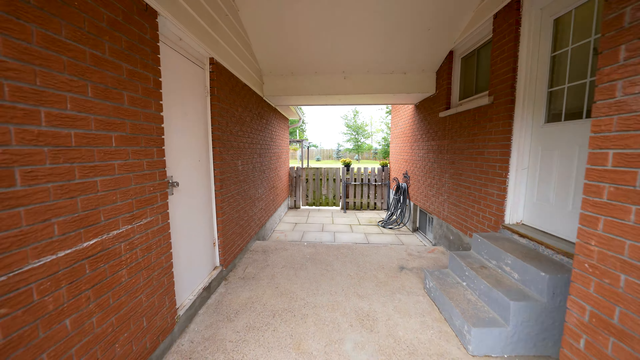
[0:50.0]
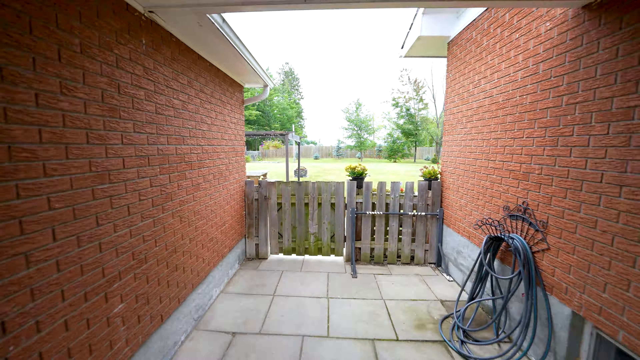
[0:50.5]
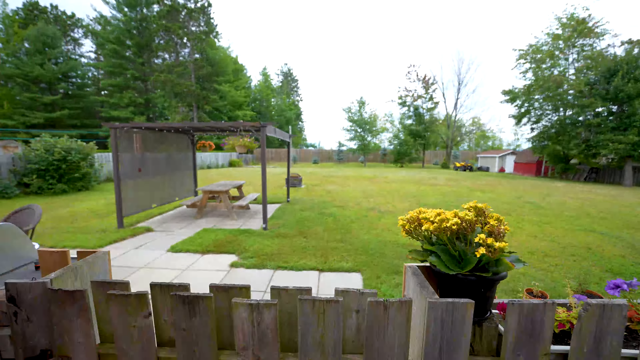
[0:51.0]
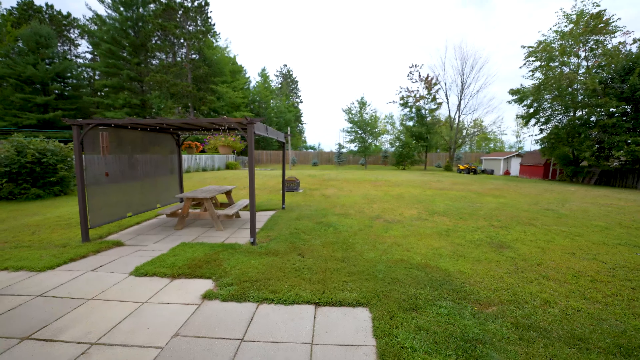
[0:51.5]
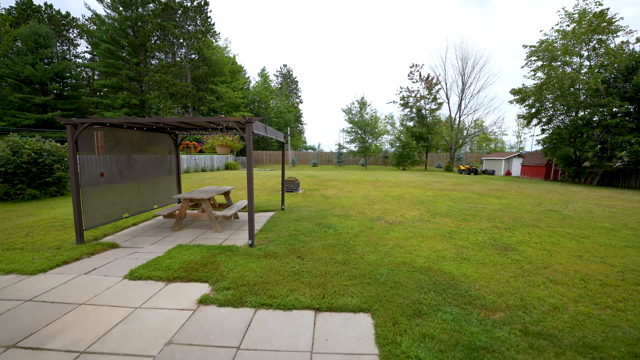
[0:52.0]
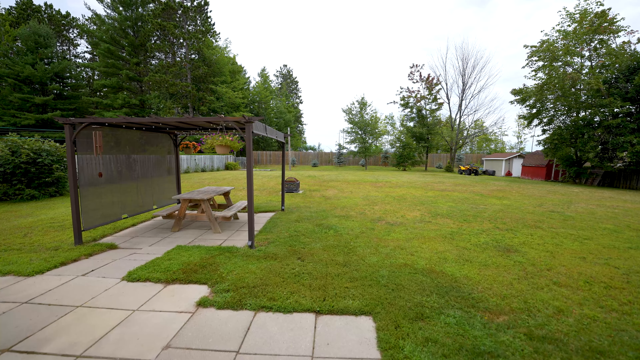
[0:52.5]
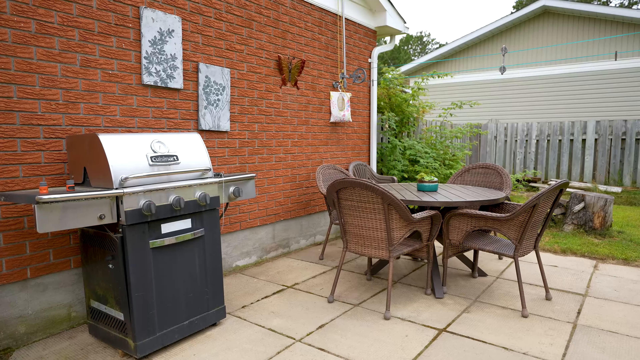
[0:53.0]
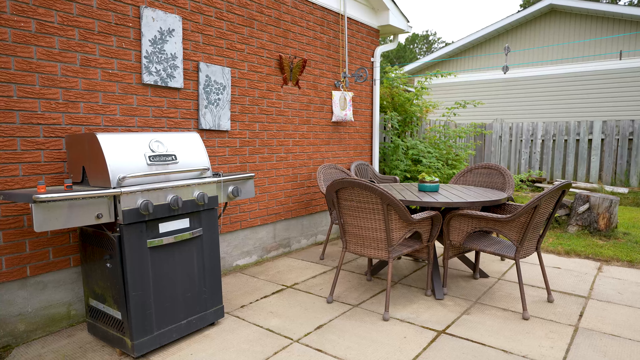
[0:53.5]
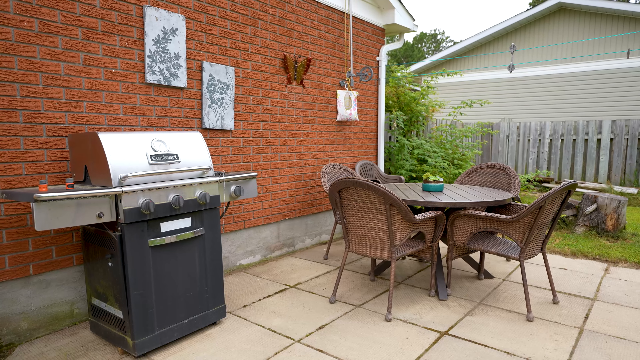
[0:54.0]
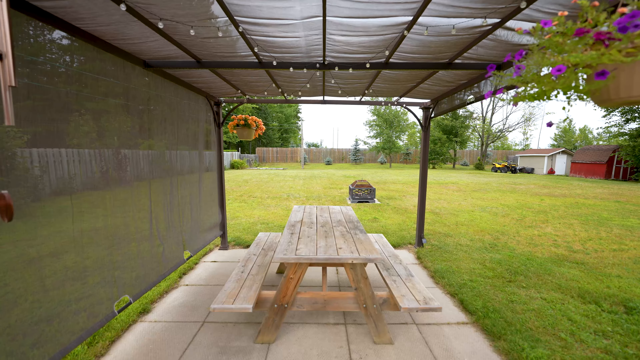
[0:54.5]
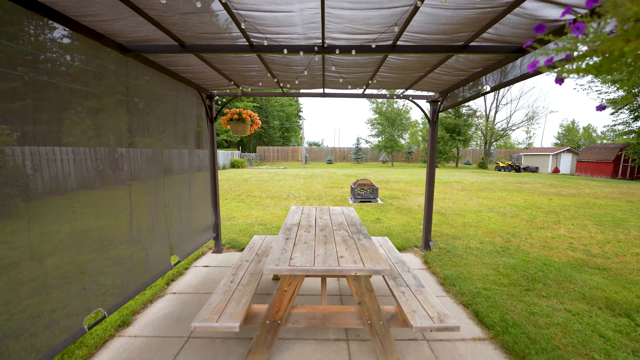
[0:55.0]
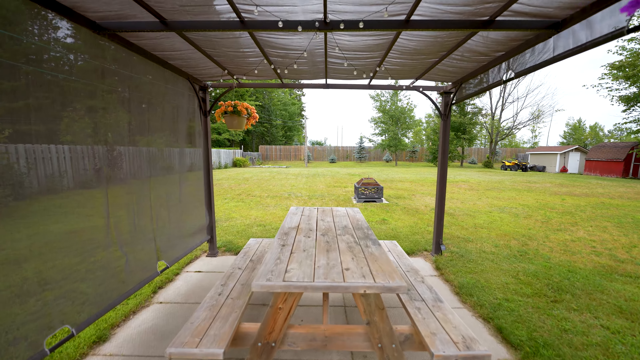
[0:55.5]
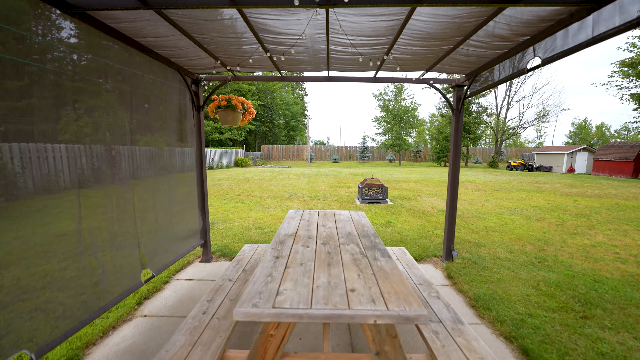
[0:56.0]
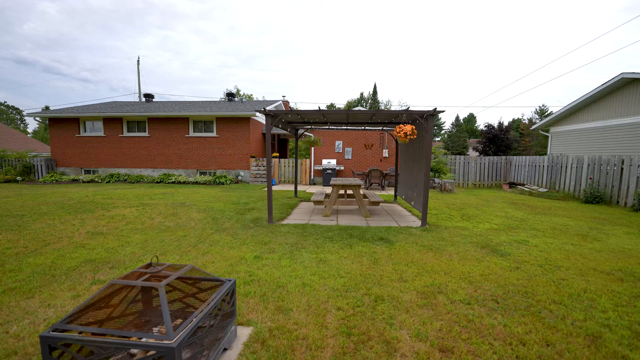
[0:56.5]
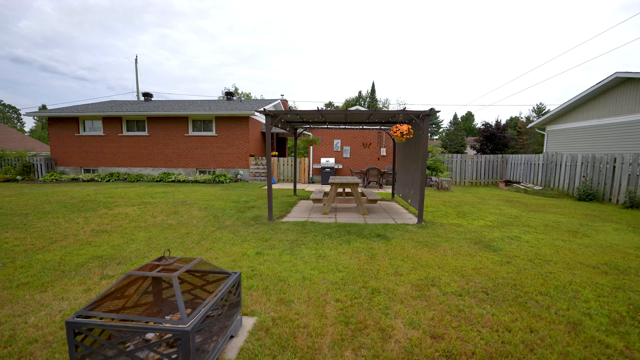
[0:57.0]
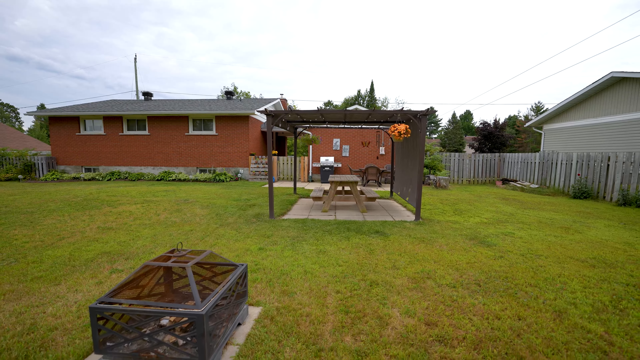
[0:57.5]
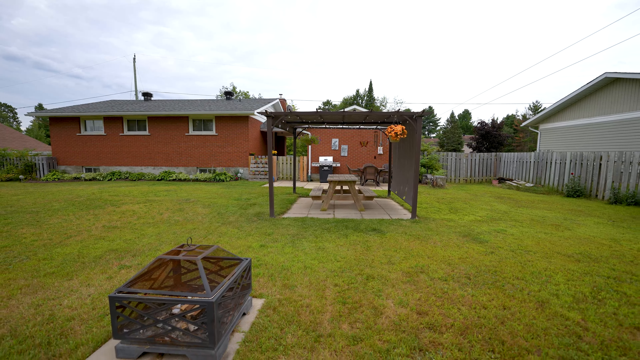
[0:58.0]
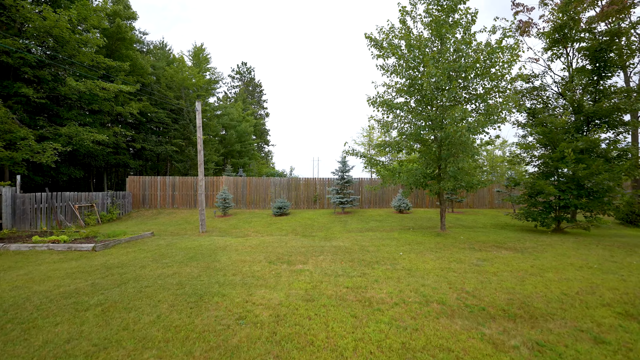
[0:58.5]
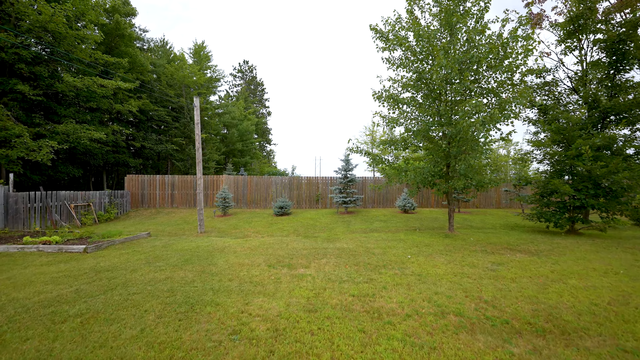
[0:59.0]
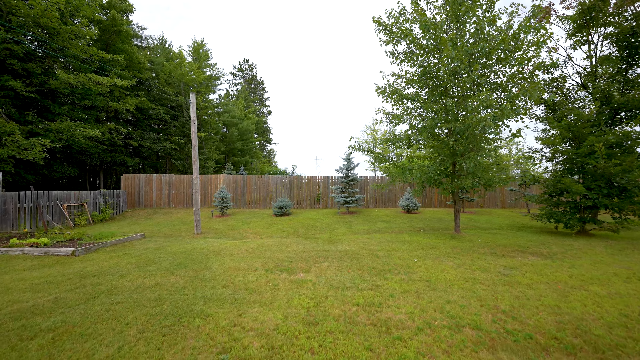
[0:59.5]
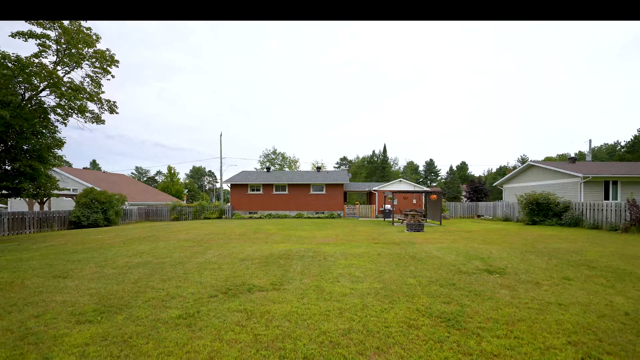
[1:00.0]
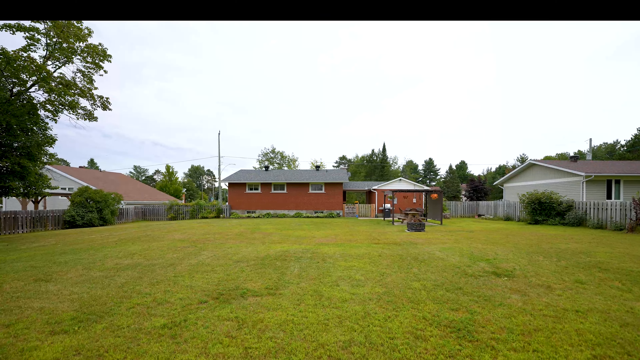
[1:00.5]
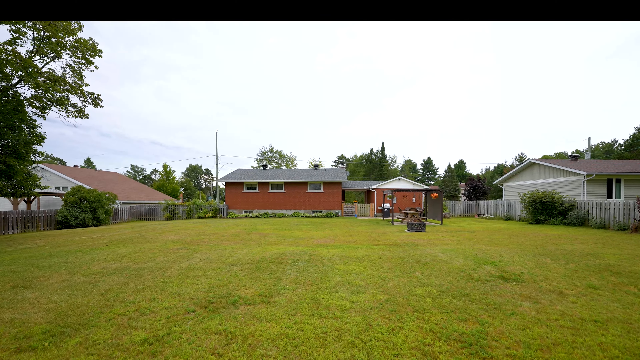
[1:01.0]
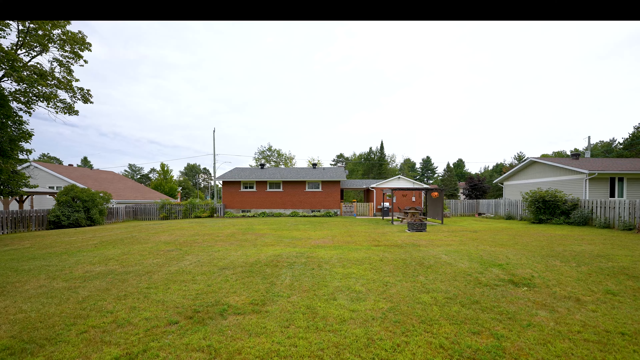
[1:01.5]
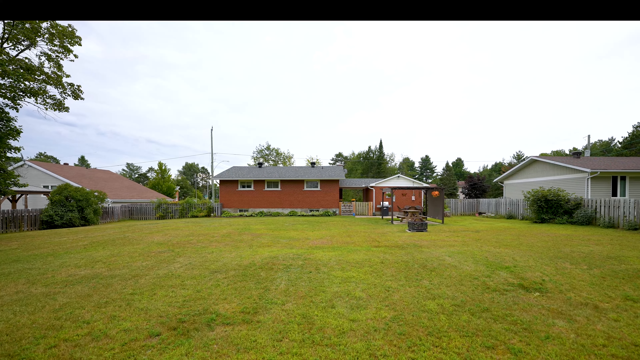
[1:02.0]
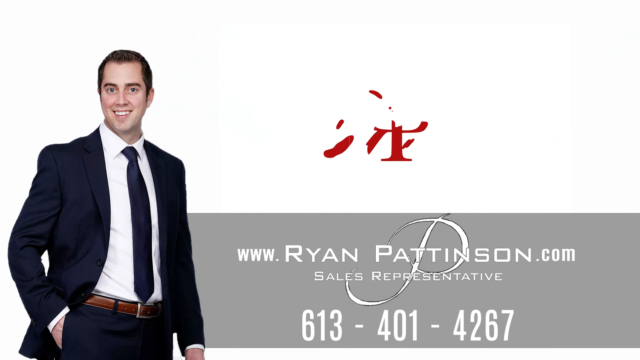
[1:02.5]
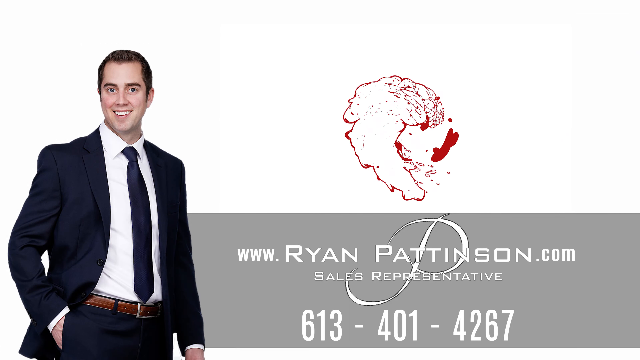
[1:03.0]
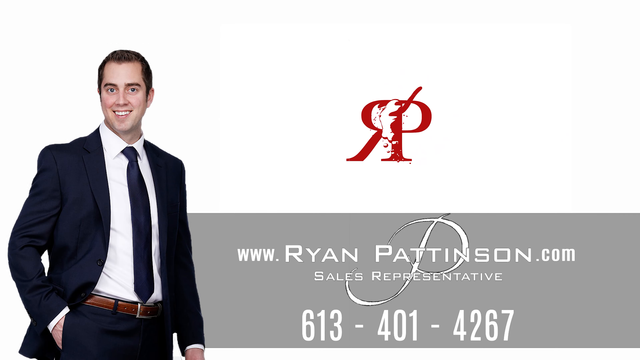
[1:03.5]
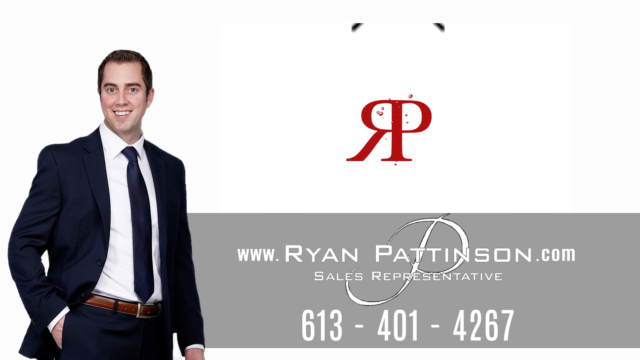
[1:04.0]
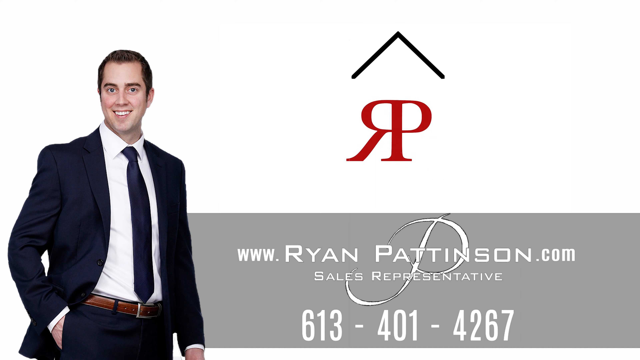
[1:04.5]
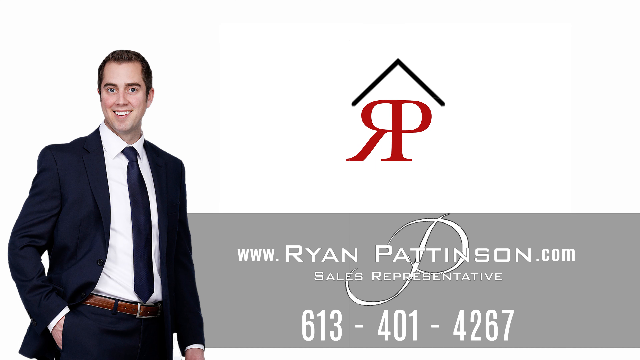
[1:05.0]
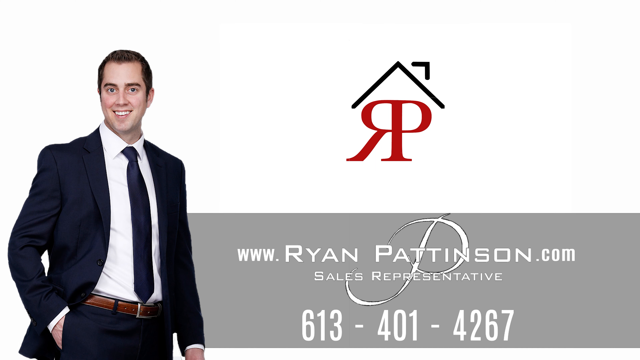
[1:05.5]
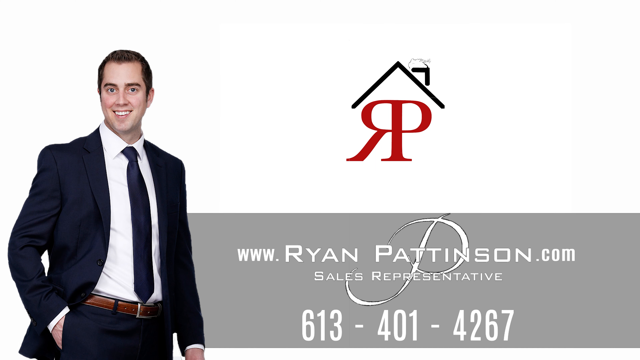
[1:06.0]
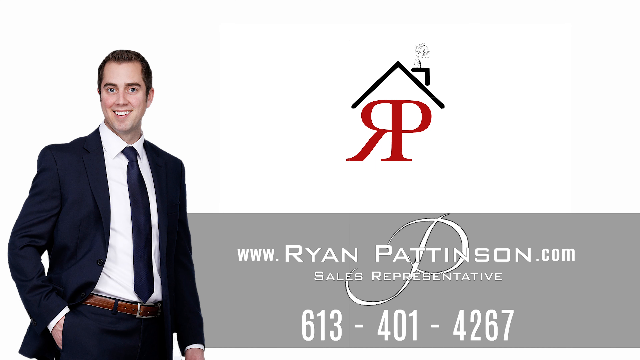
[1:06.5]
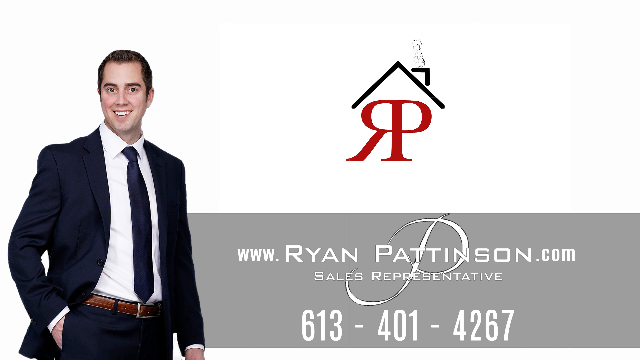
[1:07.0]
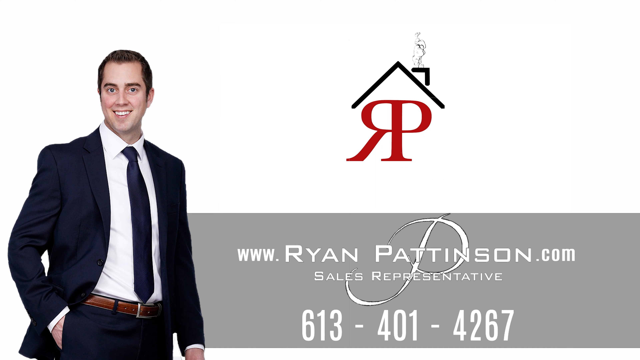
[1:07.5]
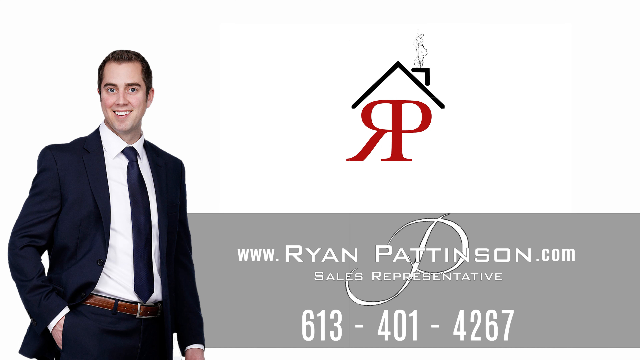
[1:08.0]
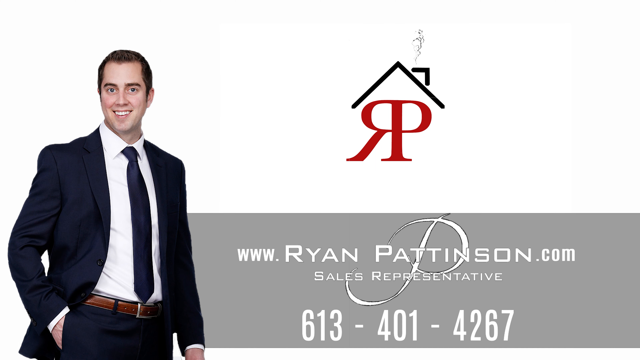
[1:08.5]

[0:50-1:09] The view moves outside, crossing a yard into the backyard, which is gigantic, apparently at least an acre, with plenty of grass, a wooden fence, a patio, a grill and a picnic table. The yard extends far back. The video is a real estate video by Ryan Pattinson, the sales representative, at www.ryanpattinson.com, for a property that is for sale.